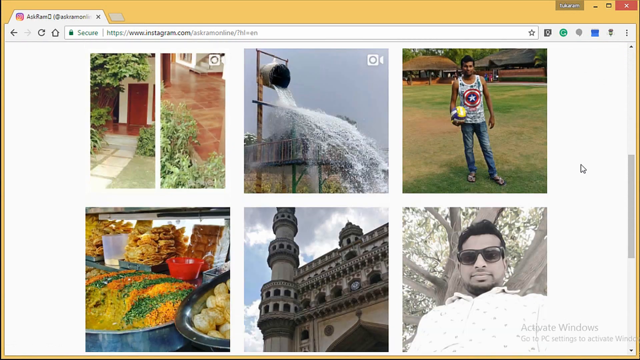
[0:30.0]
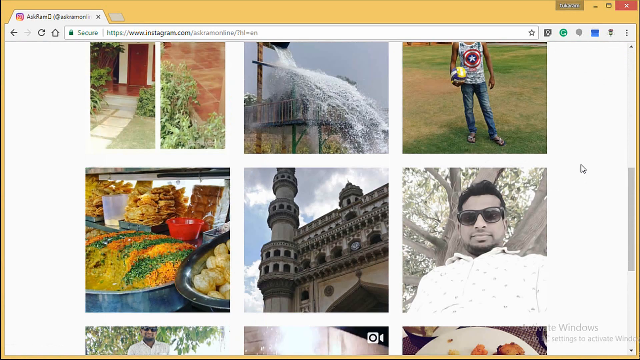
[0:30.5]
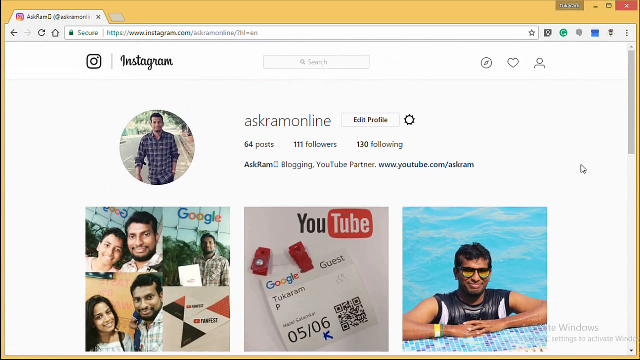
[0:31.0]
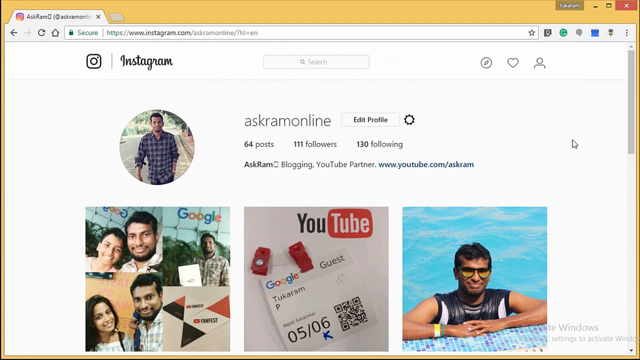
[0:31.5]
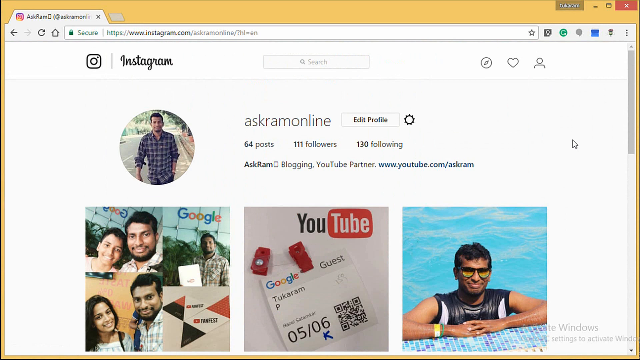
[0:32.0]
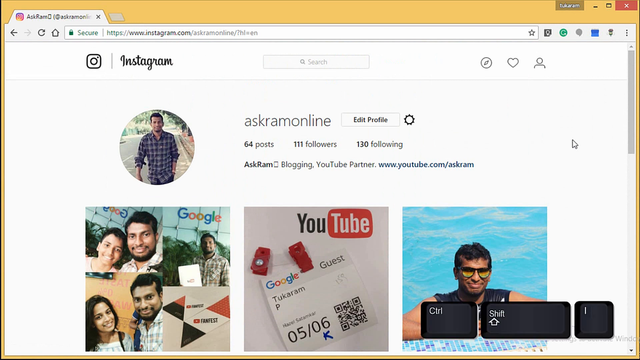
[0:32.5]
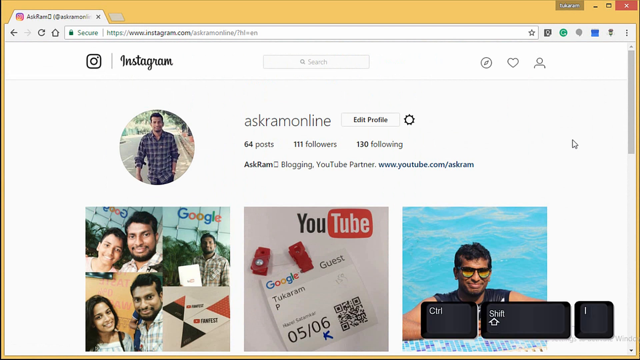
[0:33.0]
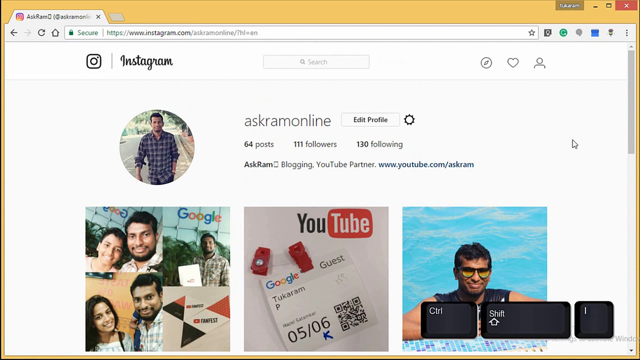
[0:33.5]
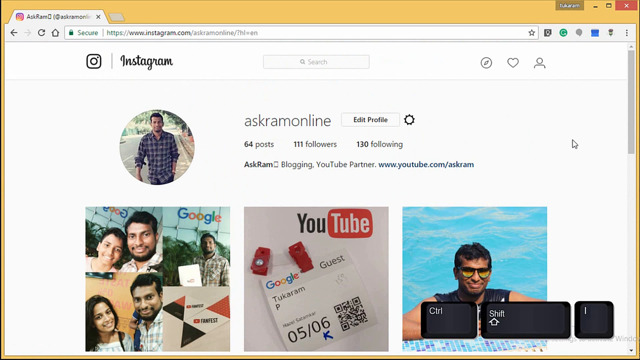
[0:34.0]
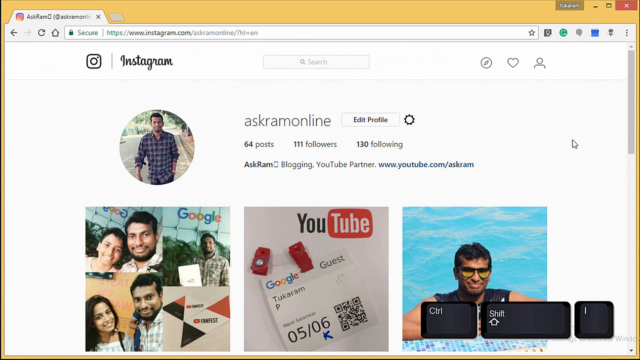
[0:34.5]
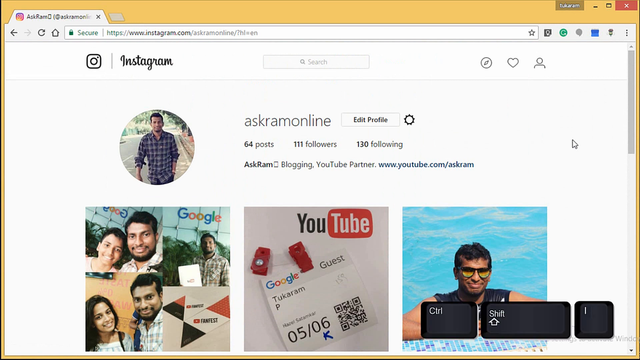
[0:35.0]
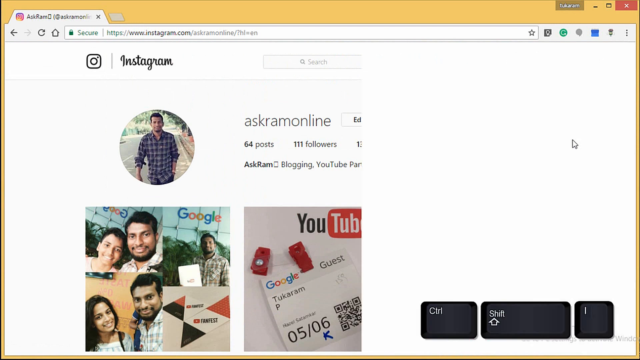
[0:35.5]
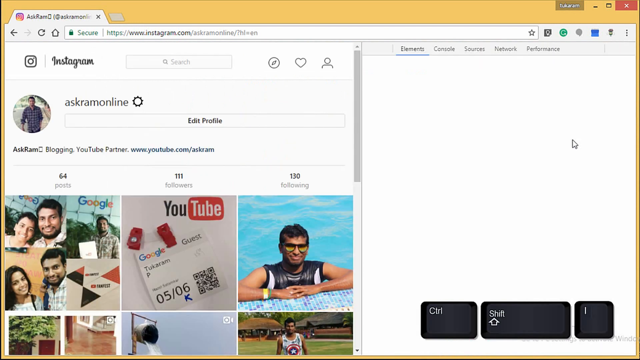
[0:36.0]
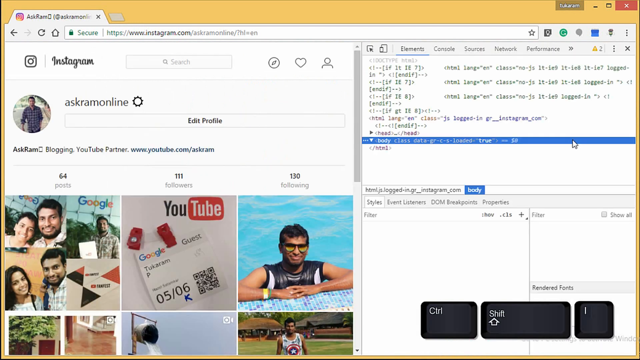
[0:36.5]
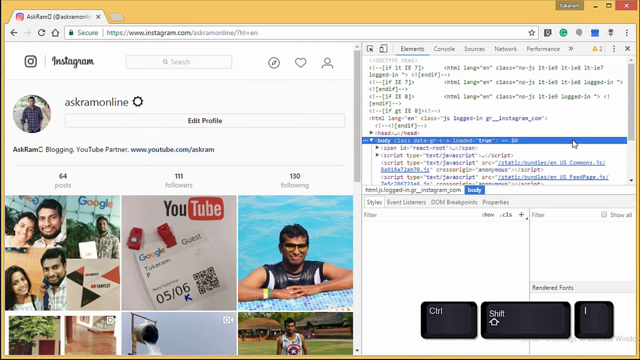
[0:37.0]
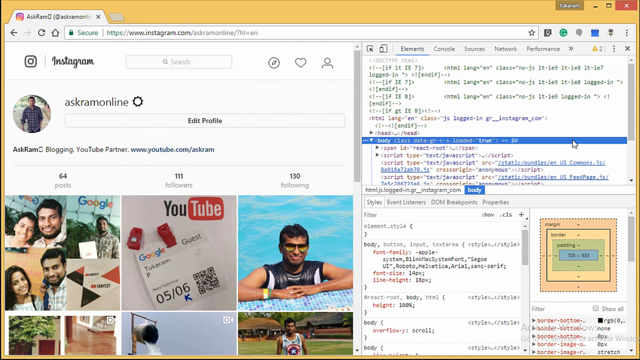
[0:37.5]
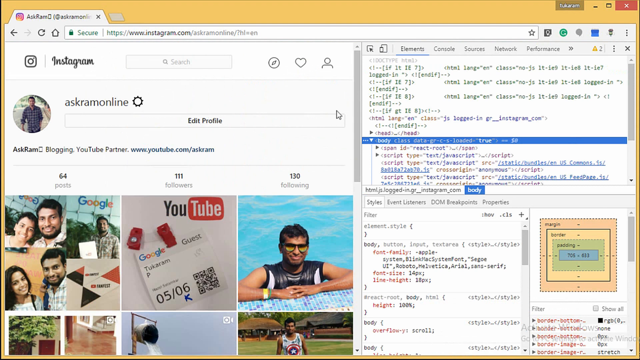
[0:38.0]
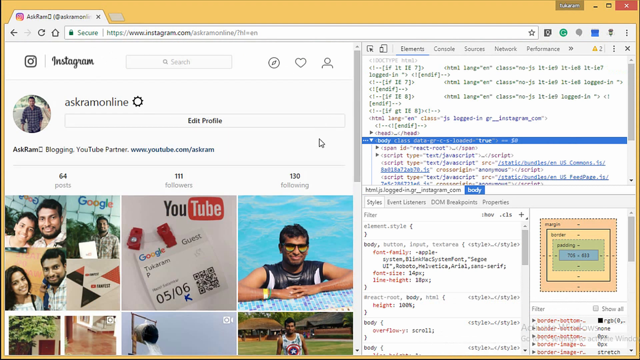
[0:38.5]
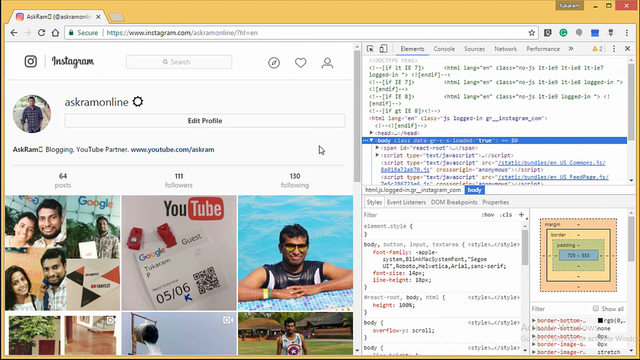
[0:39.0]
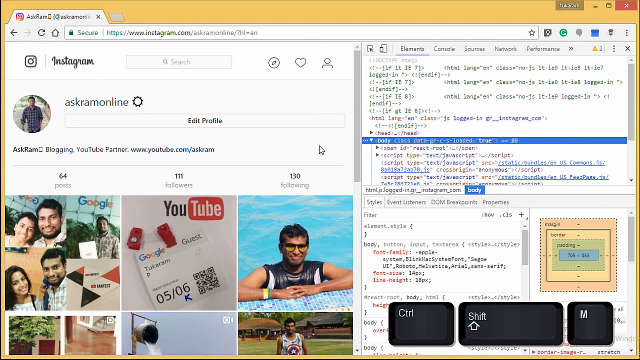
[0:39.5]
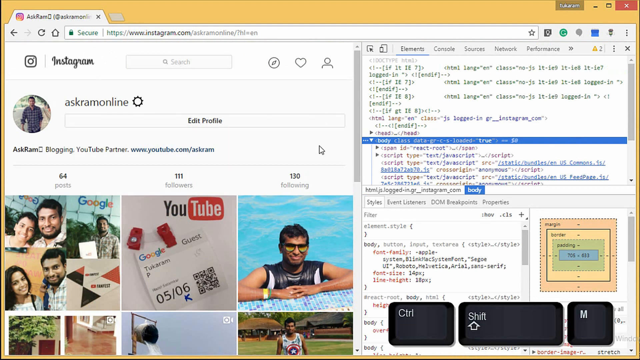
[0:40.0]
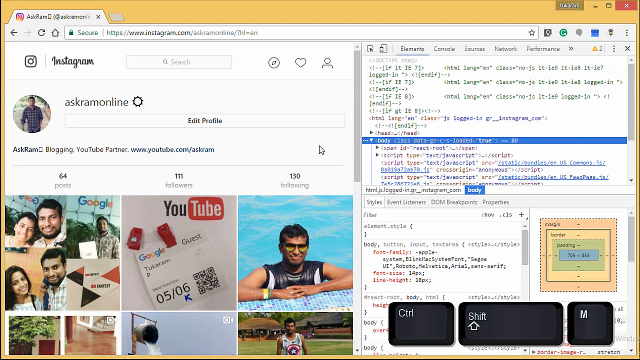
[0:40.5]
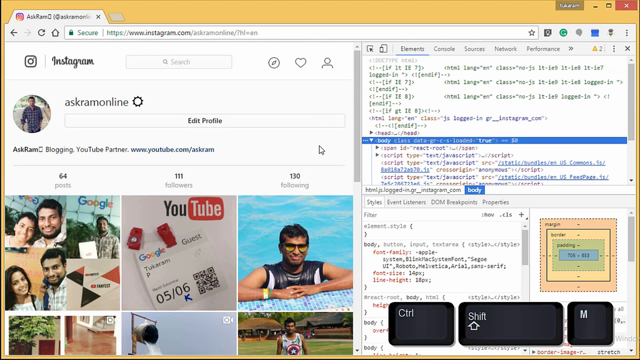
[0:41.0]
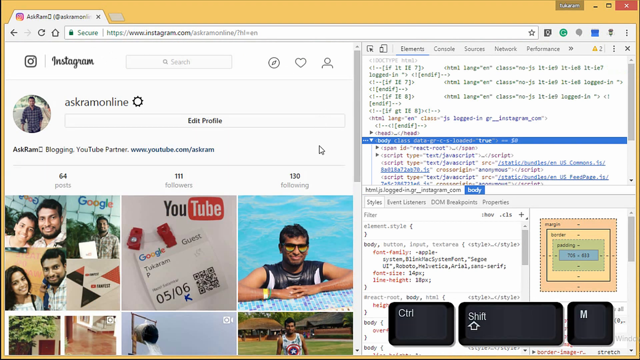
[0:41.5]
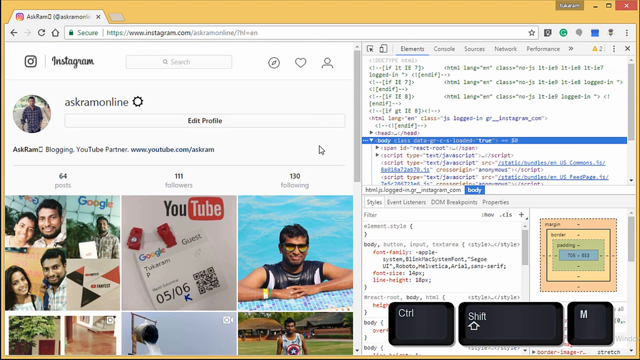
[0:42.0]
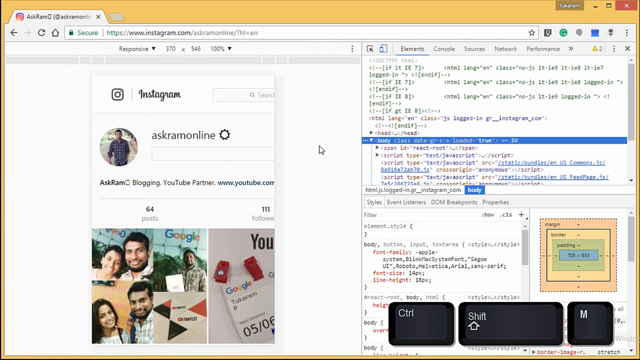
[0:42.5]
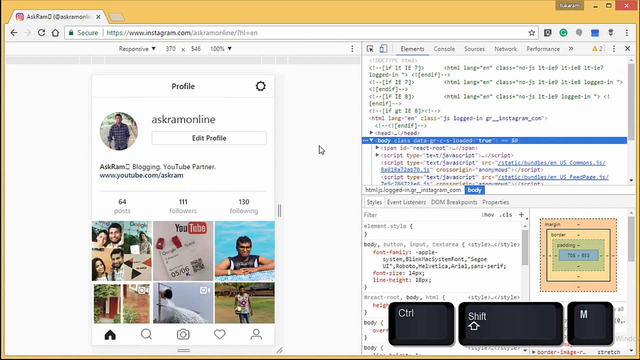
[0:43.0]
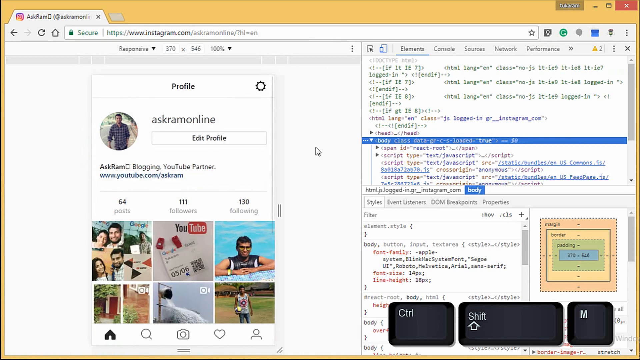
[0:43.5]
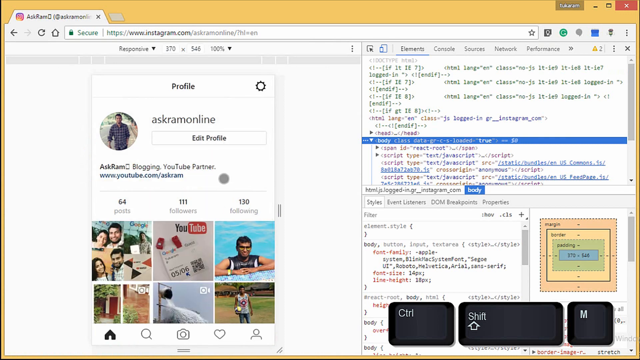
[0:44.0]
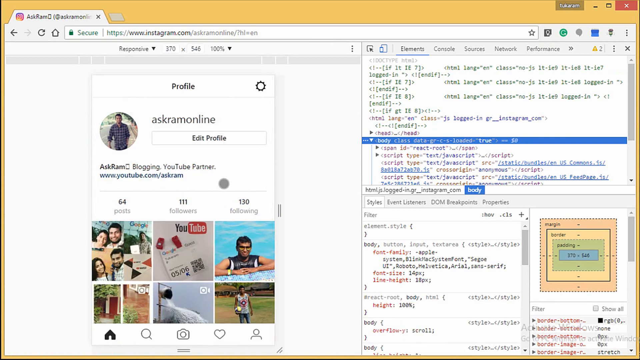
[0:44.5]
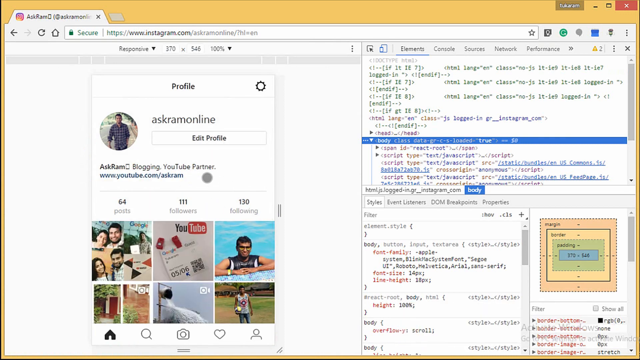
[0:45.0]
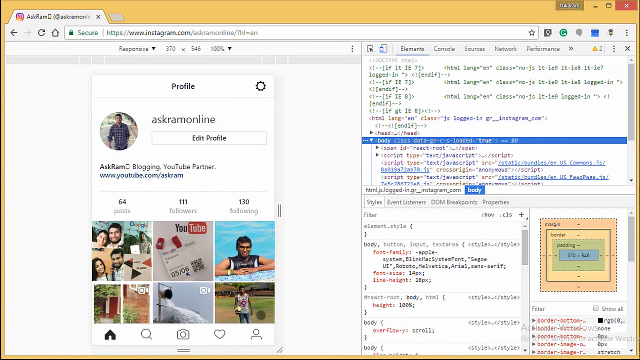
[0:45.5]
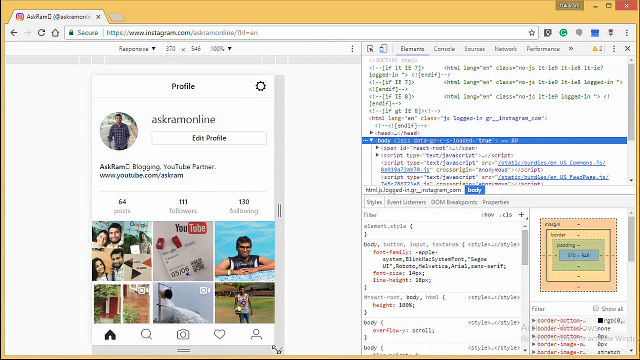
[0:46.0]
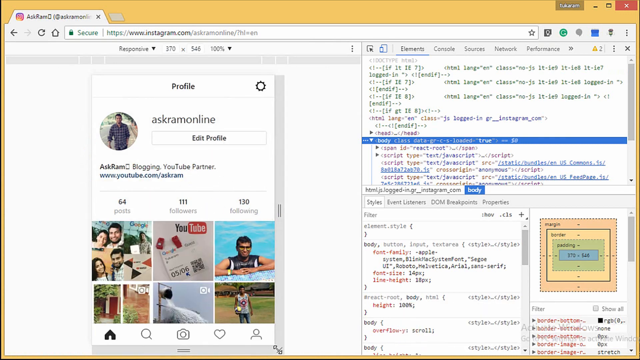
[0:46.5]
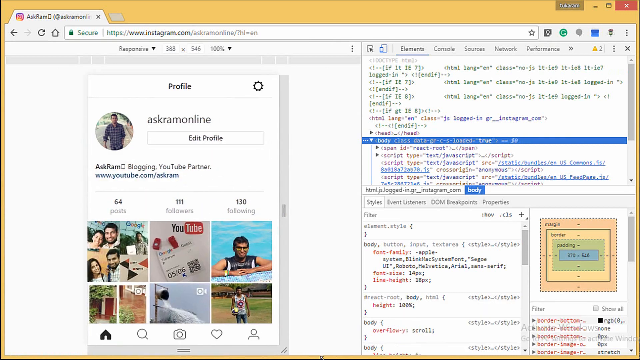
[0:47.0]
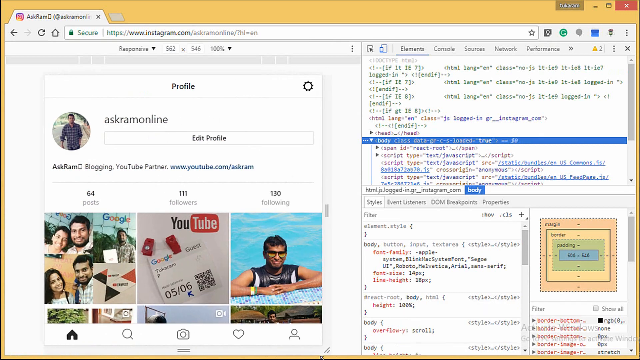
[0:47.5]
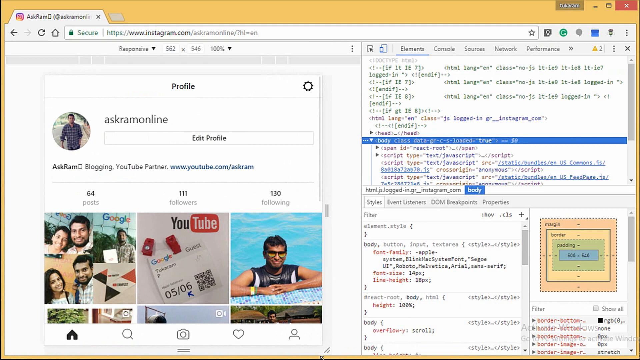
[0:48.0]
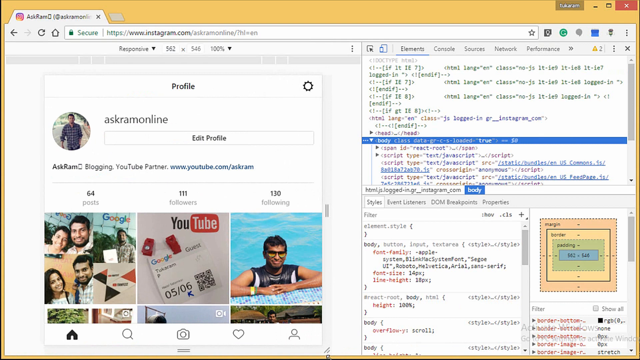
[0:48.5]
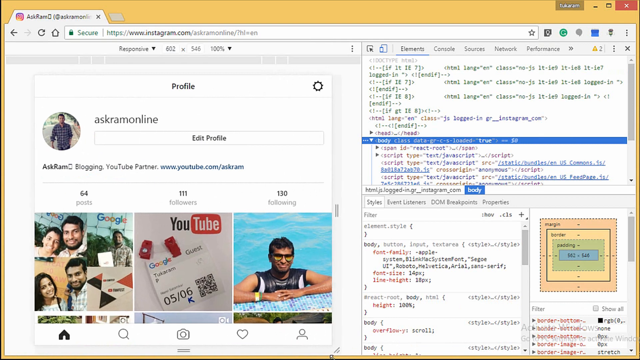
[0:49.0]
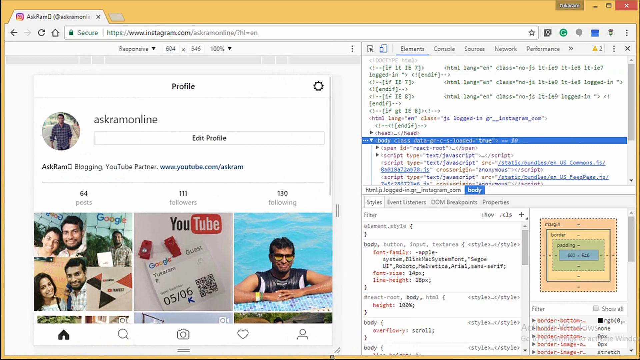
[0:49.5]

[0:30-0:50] The person keeps scrolling on his phone, showing images mostly of himself in different places doing different things, with few other people. Other pictures show other things: food, apparently at a market where the food is sold; something like a big pot pouring some water, in a picture showing an industrial area; the man standing in a football field holding a football, with structures that look like a home with a gazebo in the field; and a building, seemingly somewhere in Asia. Some pictures show him with a partner. Something like Python code is visible on the right side of the screen.